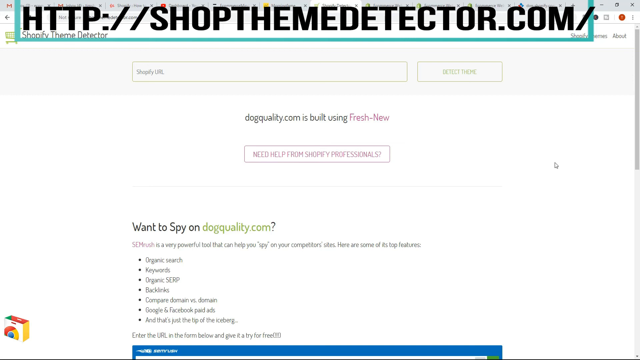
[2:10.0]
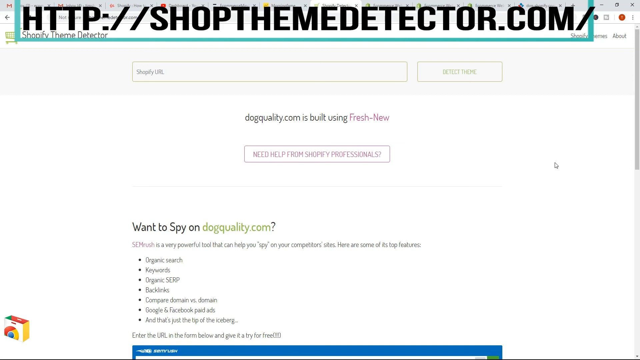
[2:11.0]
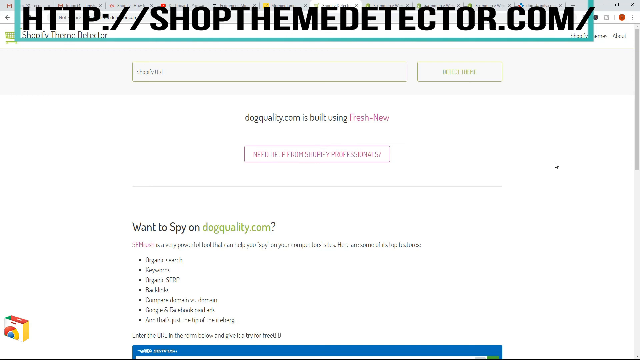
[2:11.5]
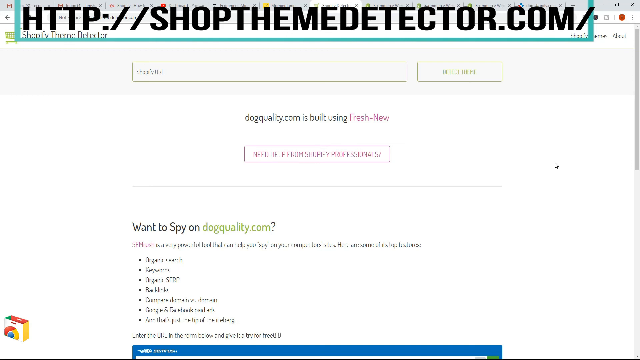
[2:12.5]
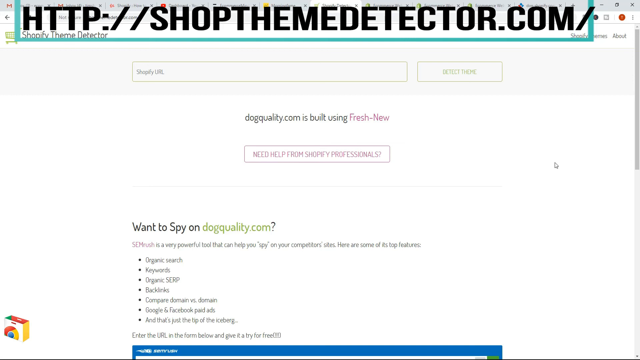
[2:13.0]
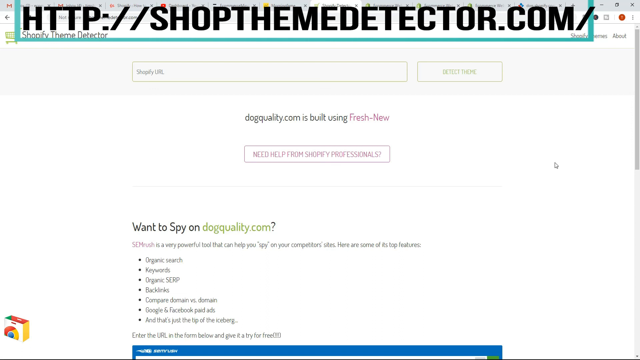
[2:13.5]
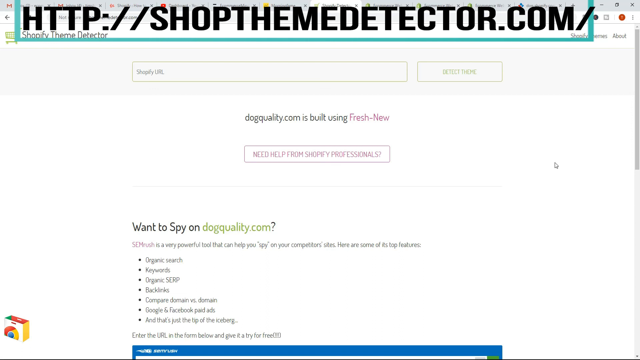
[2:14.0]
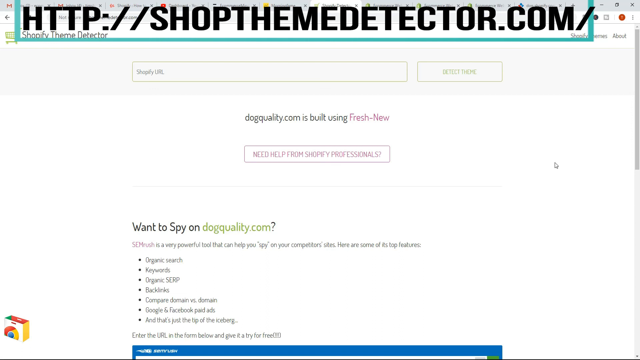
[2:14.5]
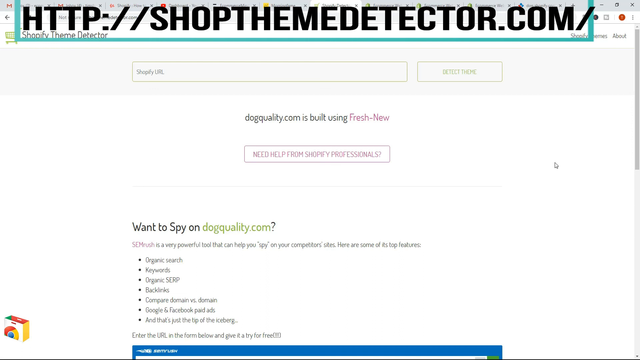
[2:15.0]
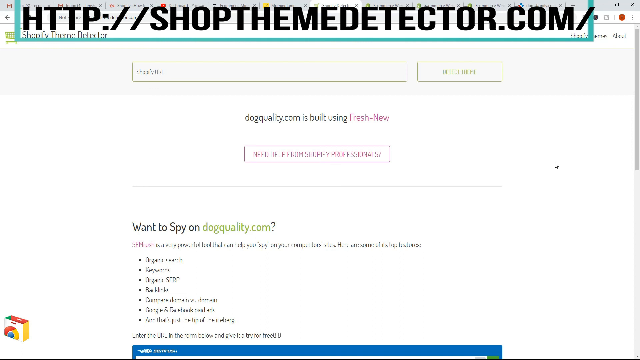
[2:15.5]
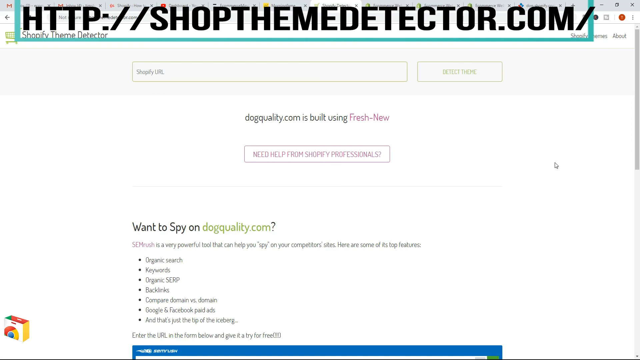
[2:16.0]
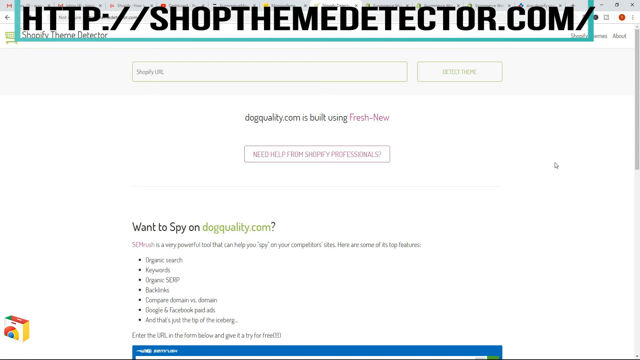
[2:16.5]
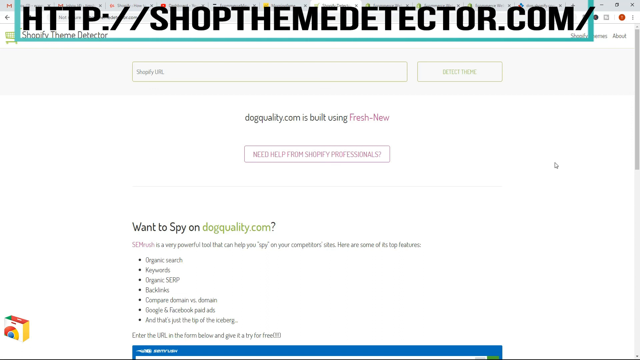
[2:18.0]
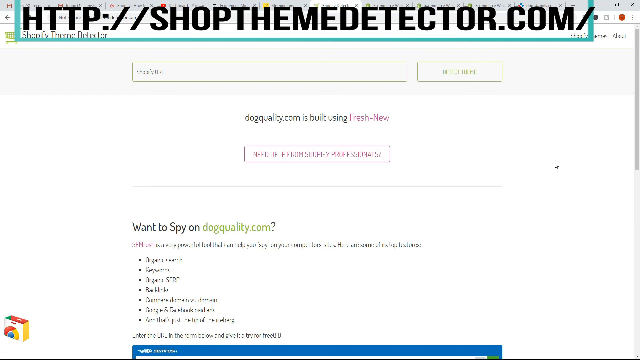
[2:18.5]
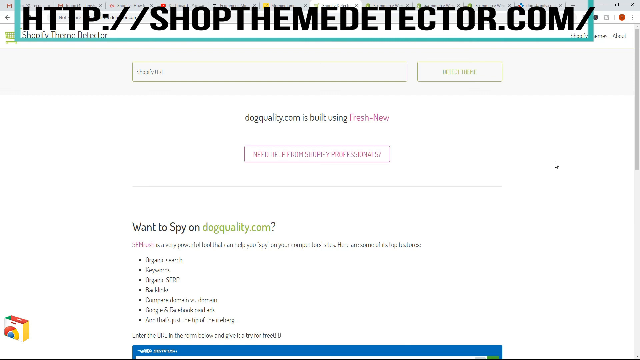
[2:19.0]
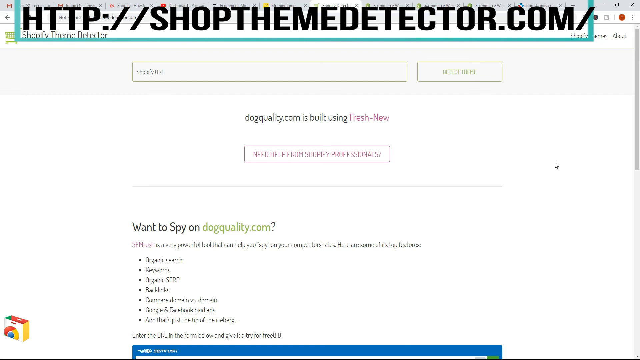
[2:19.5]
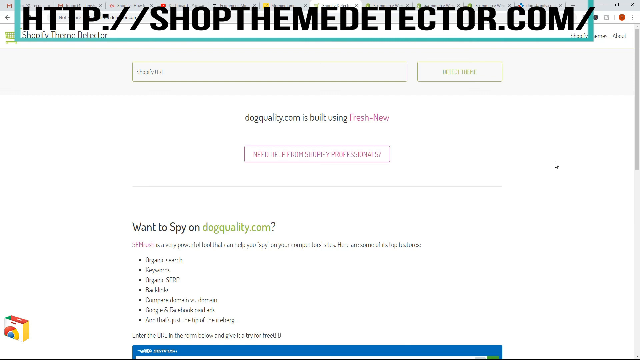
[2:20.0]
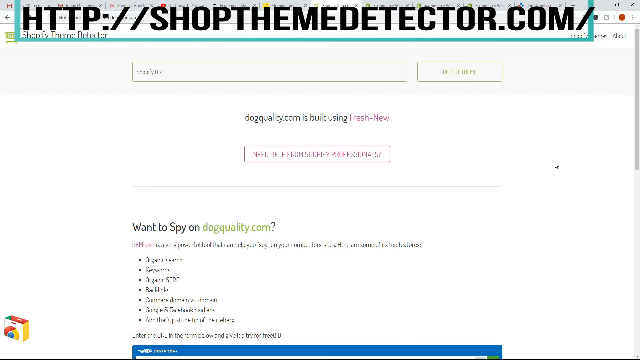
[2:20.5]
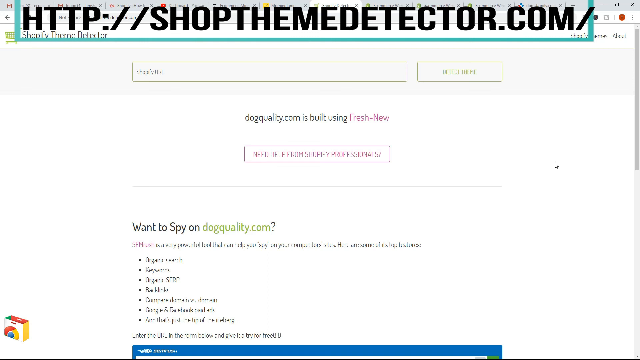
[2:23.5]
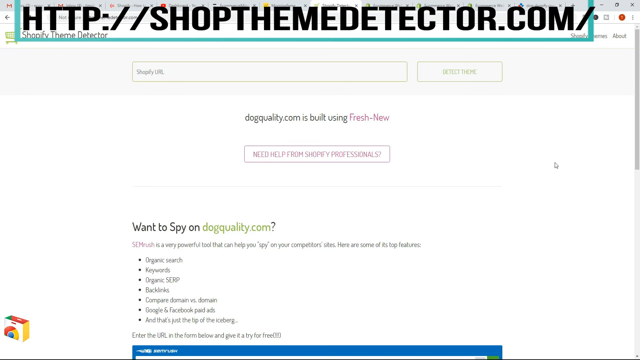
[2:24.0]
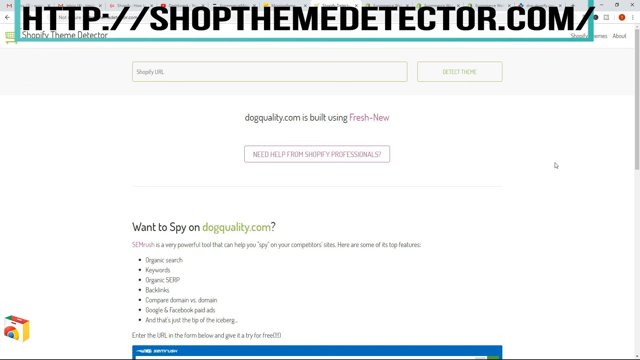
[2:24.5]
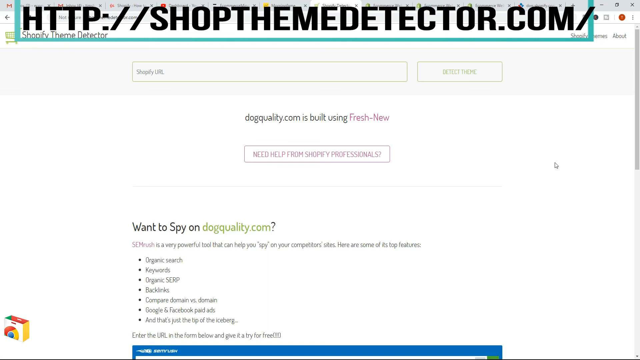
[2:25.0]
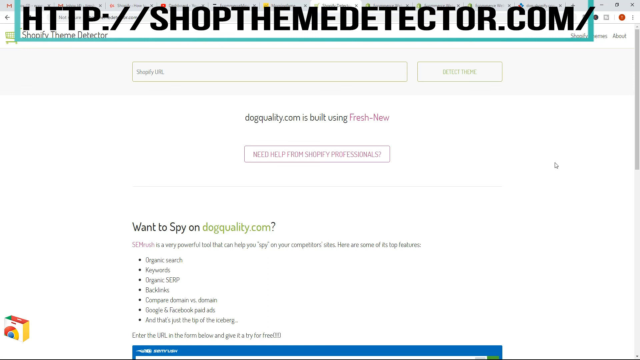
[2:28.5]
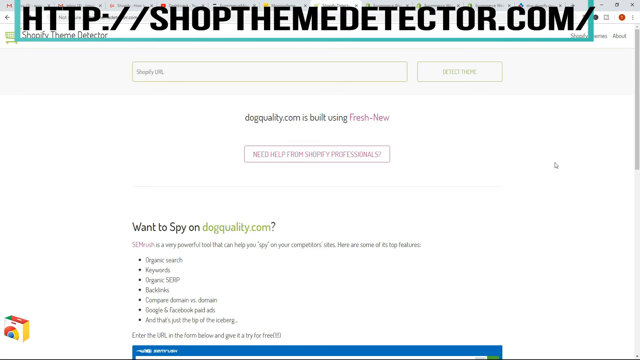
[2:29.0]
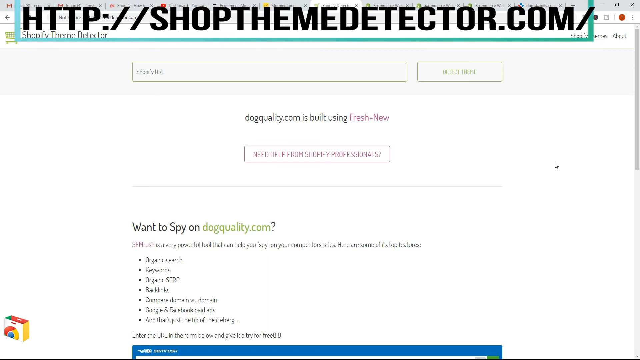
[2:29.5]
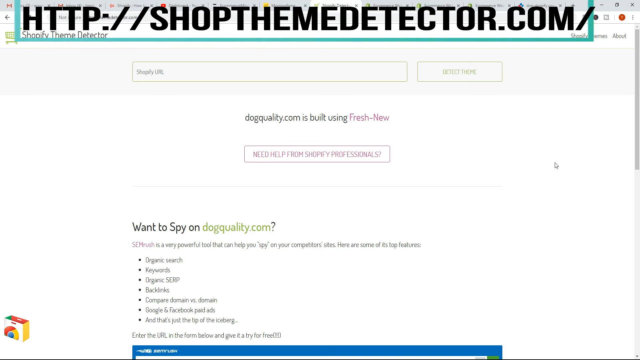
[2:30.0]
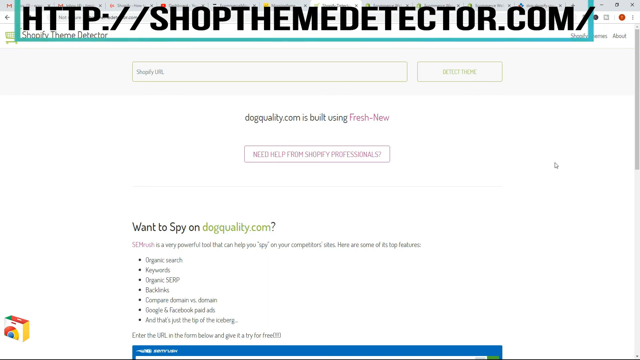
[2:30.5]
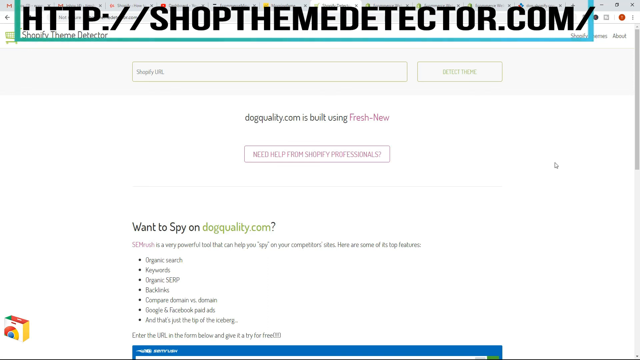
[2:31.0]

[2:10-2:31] The search for fresh-new is shown, bringing up many different items on the shopthemedetector.com website.